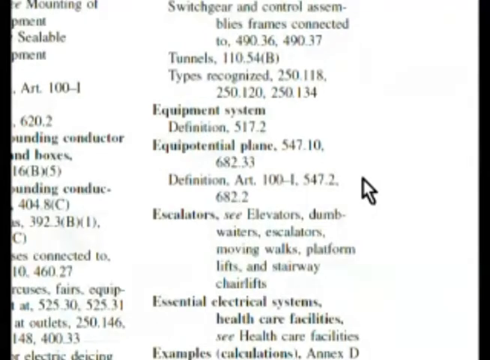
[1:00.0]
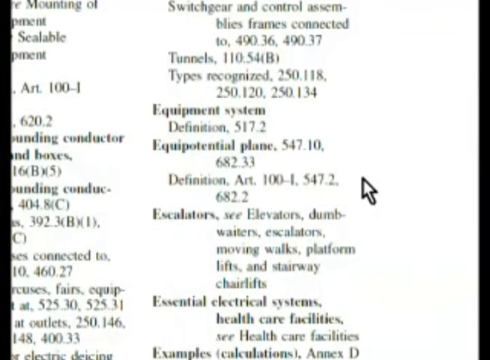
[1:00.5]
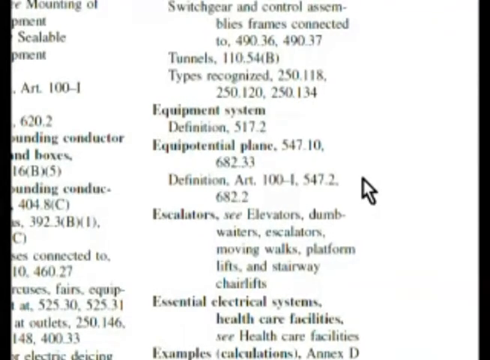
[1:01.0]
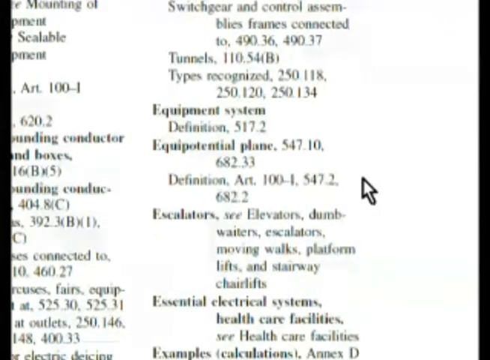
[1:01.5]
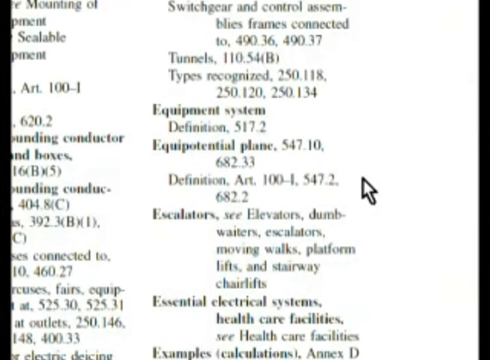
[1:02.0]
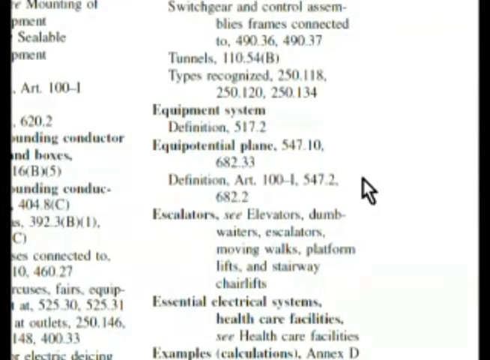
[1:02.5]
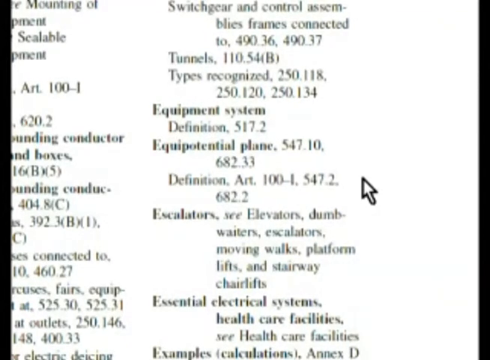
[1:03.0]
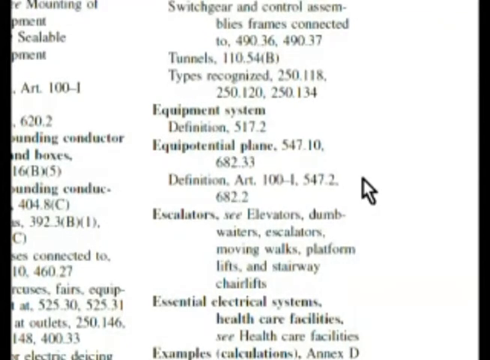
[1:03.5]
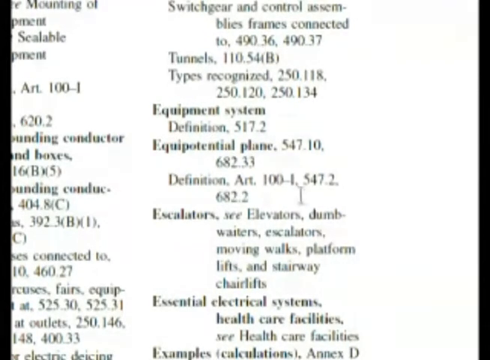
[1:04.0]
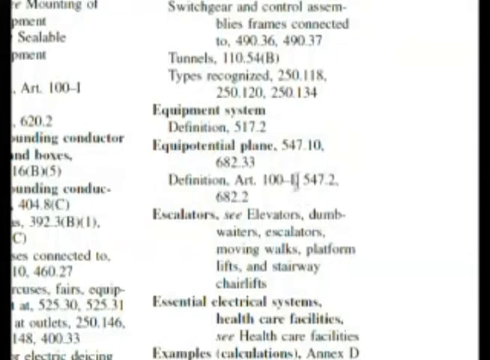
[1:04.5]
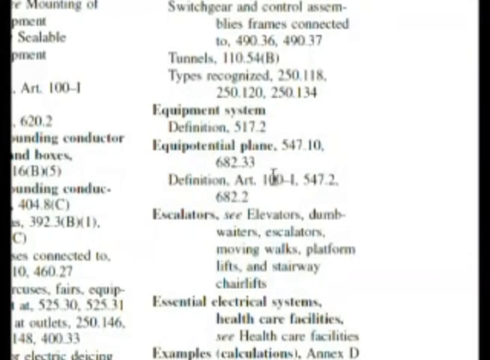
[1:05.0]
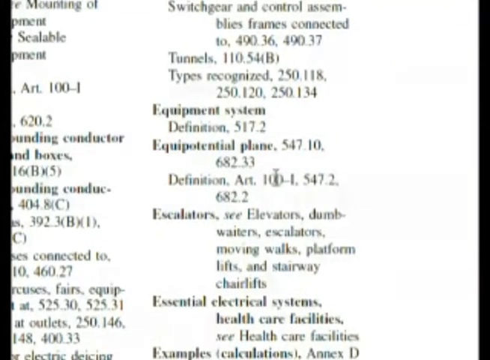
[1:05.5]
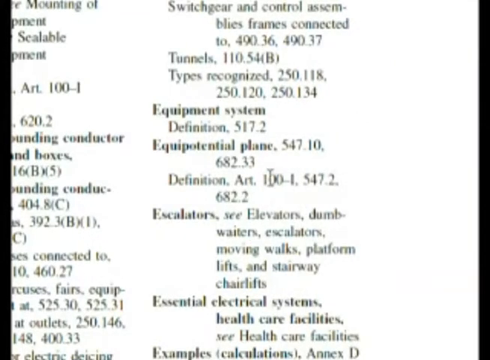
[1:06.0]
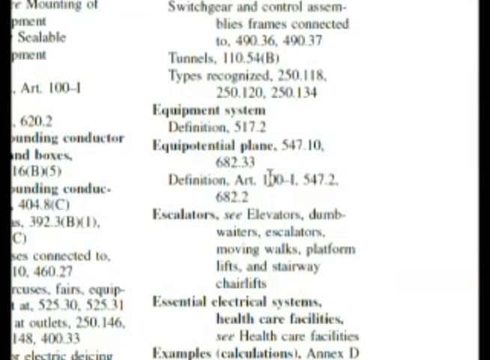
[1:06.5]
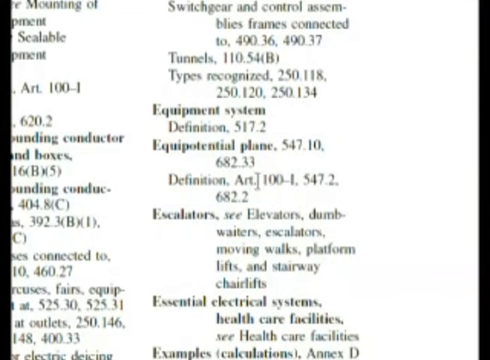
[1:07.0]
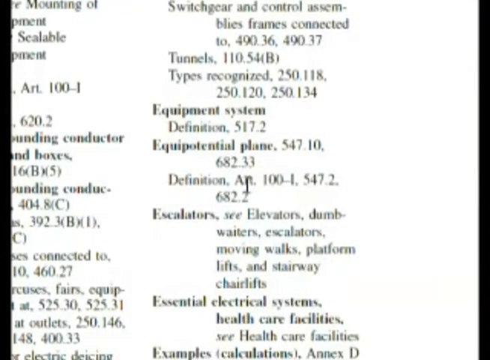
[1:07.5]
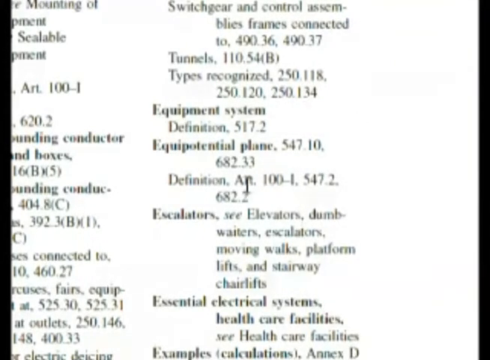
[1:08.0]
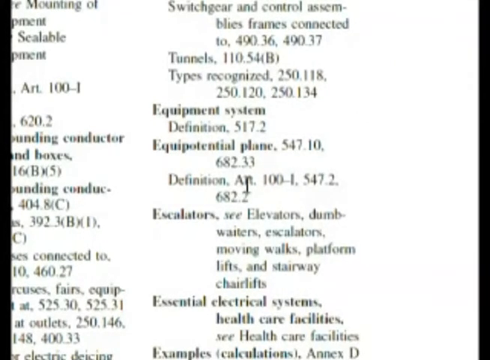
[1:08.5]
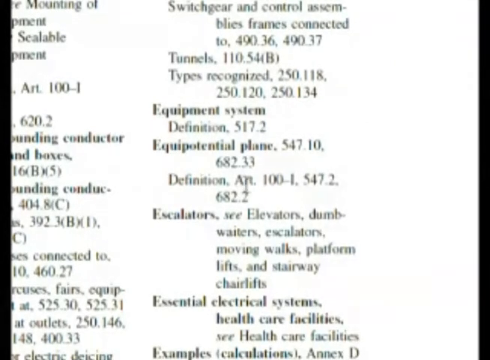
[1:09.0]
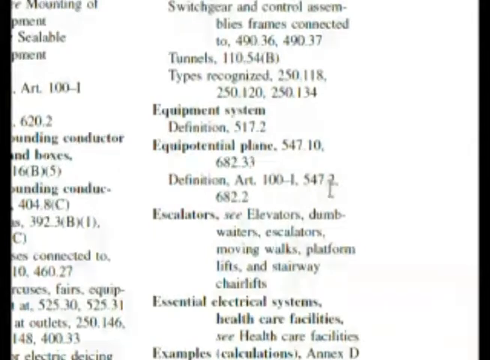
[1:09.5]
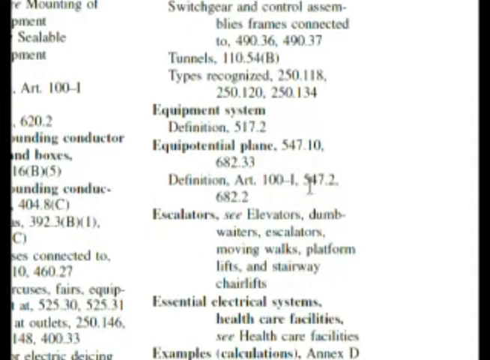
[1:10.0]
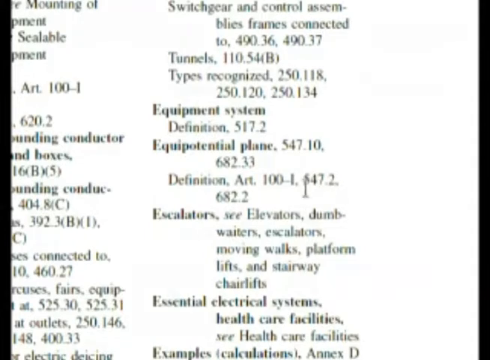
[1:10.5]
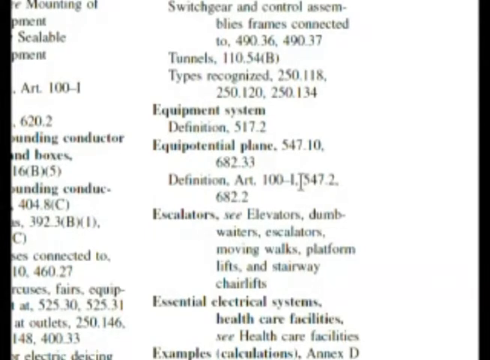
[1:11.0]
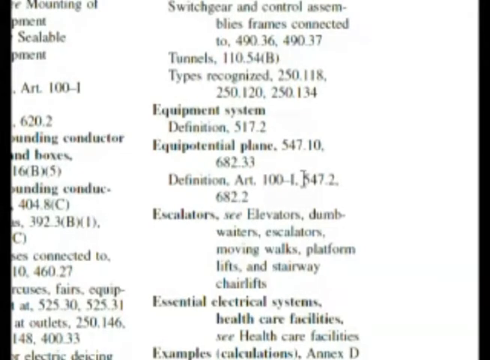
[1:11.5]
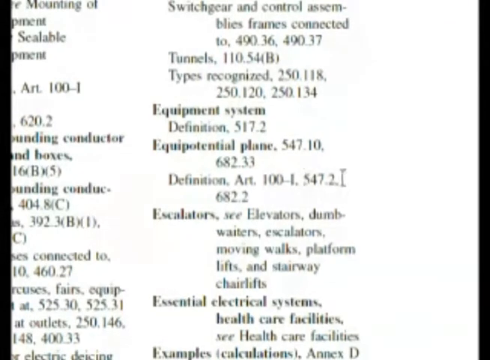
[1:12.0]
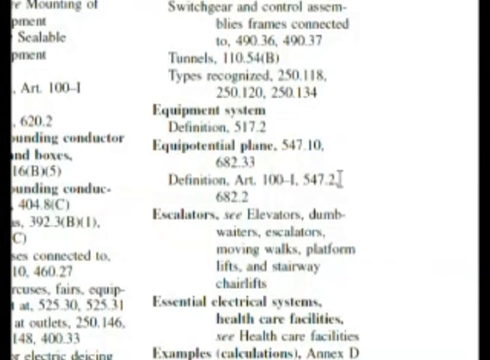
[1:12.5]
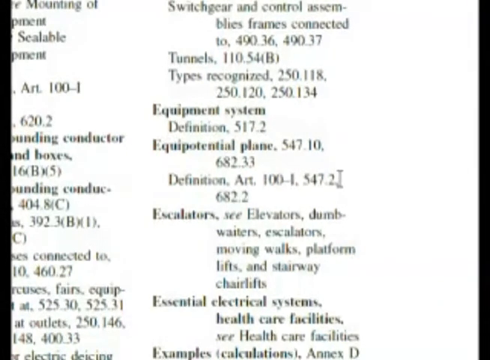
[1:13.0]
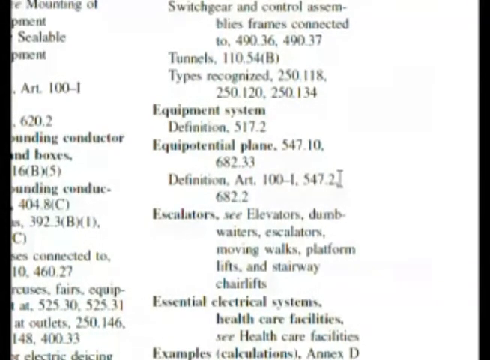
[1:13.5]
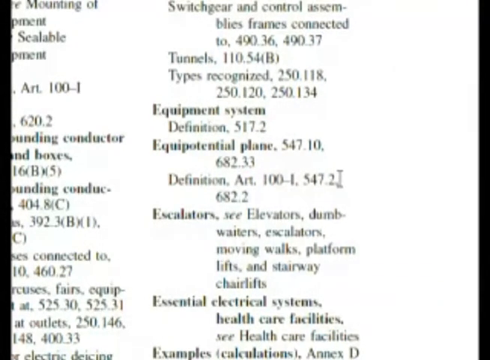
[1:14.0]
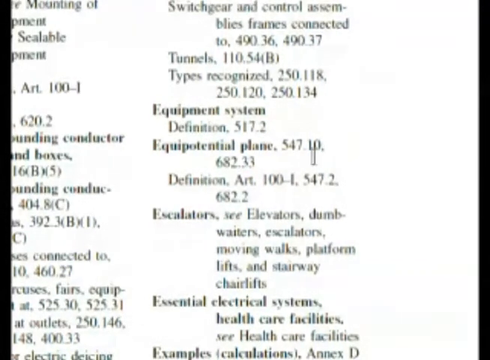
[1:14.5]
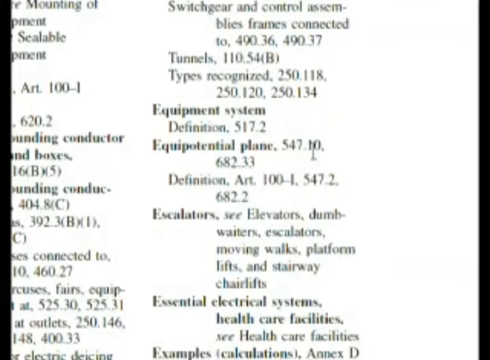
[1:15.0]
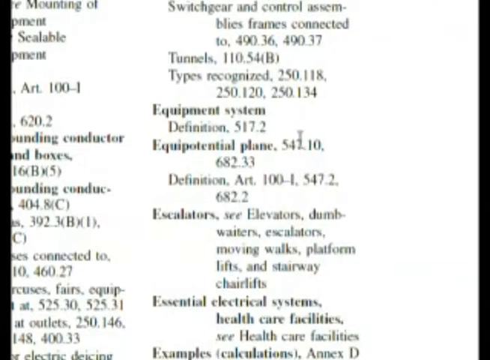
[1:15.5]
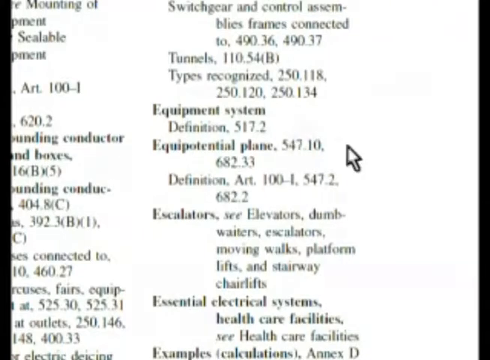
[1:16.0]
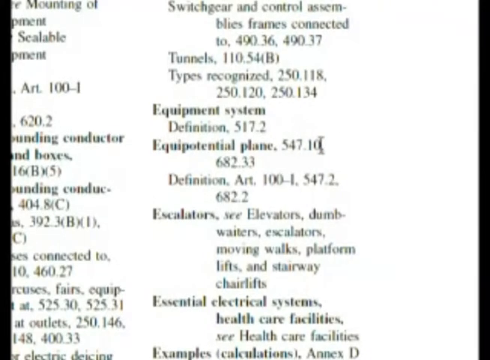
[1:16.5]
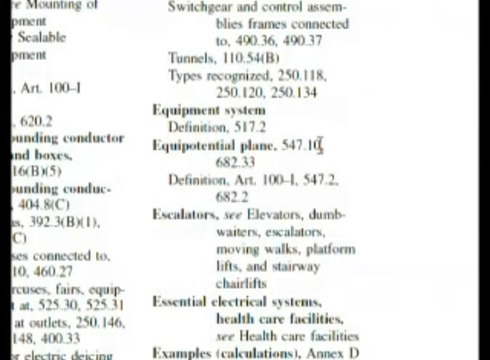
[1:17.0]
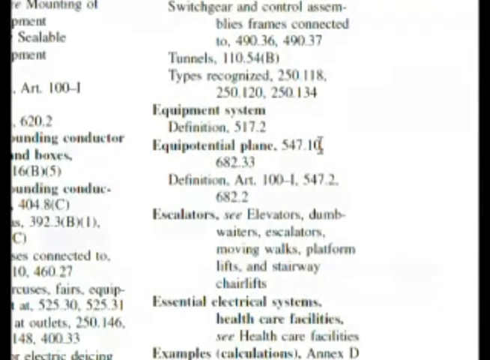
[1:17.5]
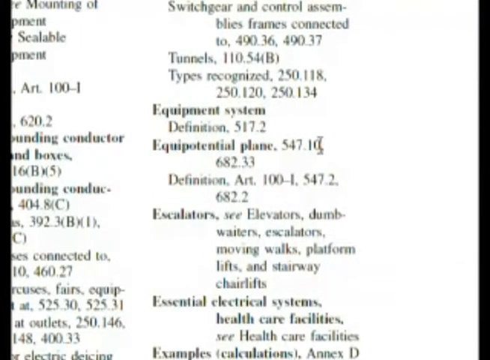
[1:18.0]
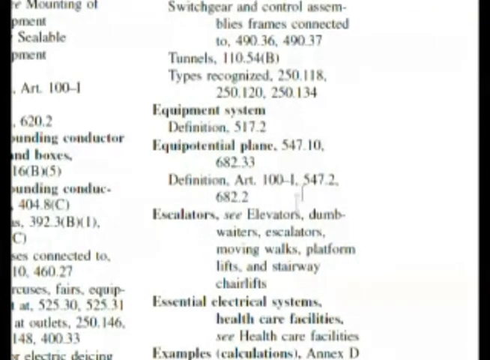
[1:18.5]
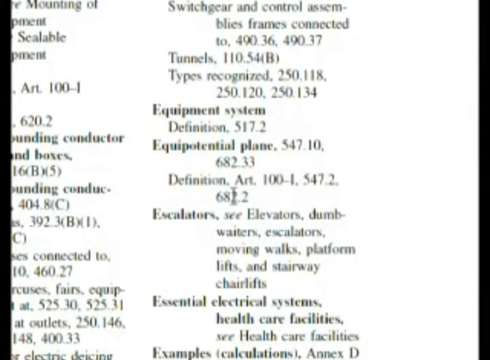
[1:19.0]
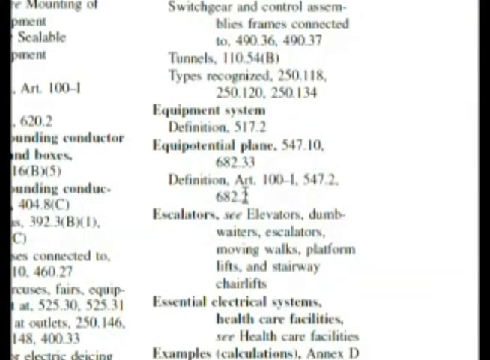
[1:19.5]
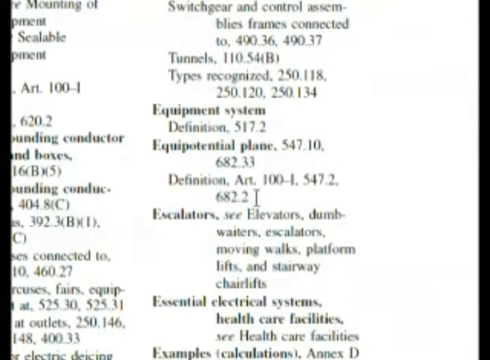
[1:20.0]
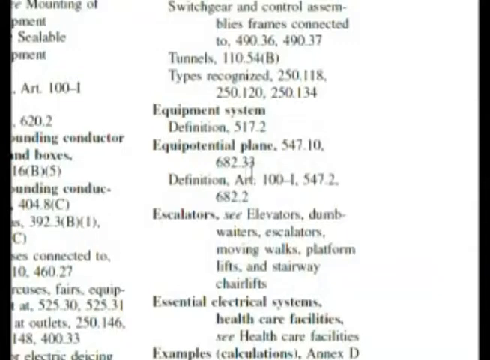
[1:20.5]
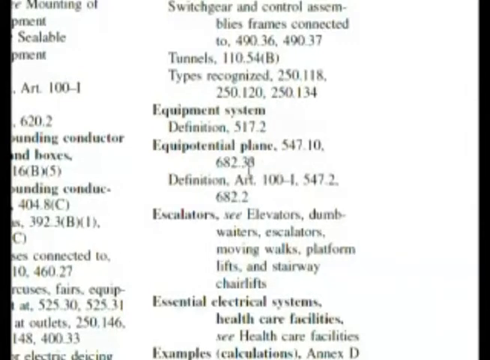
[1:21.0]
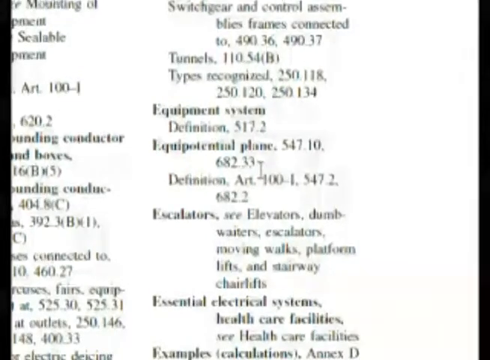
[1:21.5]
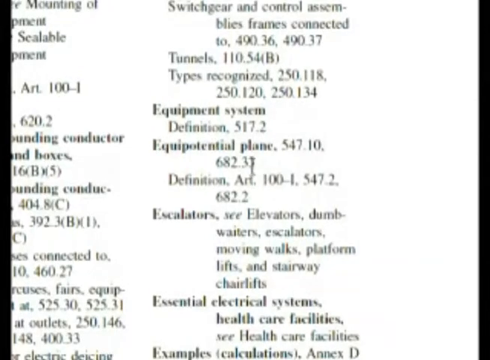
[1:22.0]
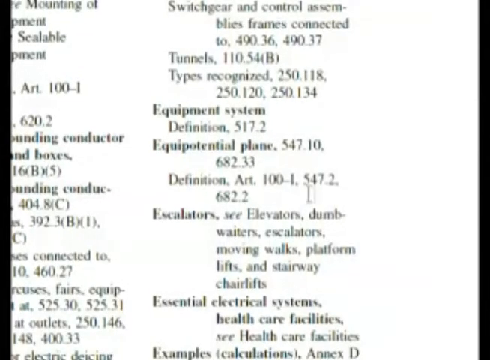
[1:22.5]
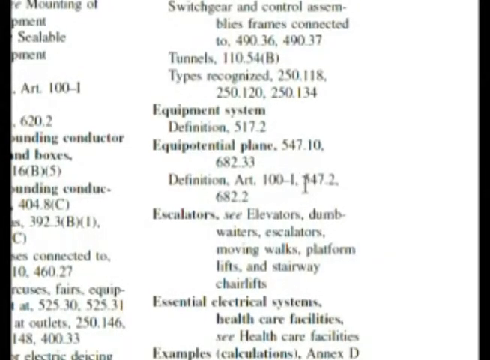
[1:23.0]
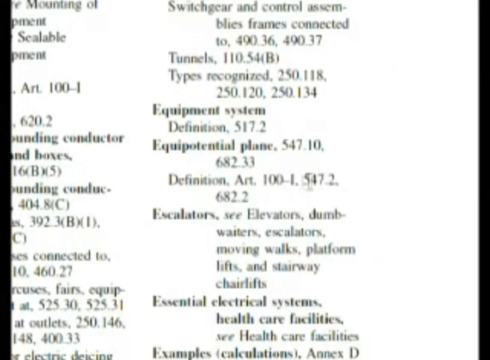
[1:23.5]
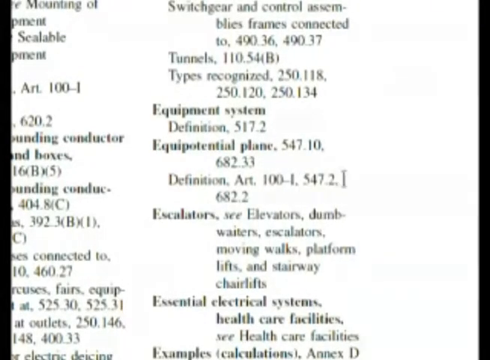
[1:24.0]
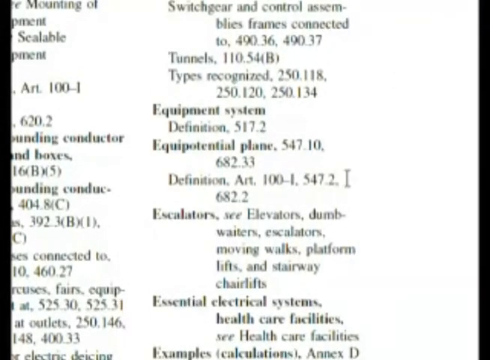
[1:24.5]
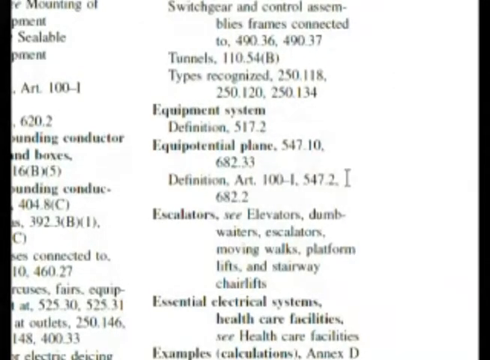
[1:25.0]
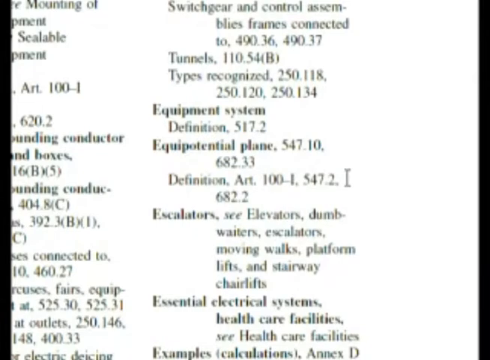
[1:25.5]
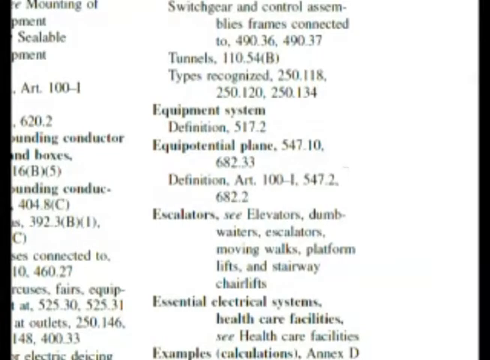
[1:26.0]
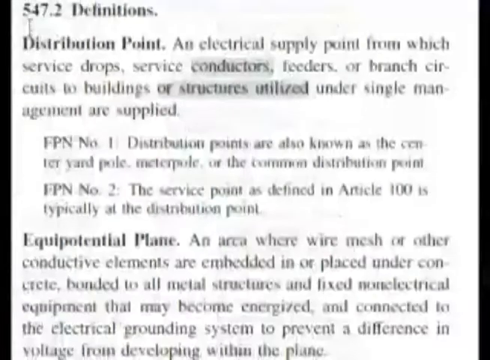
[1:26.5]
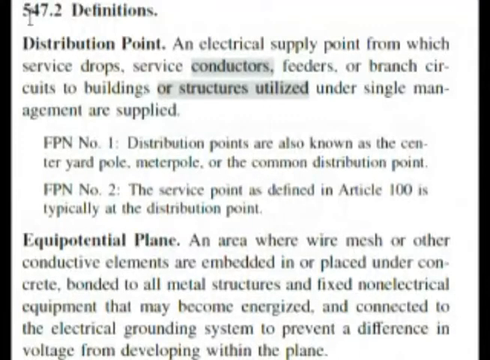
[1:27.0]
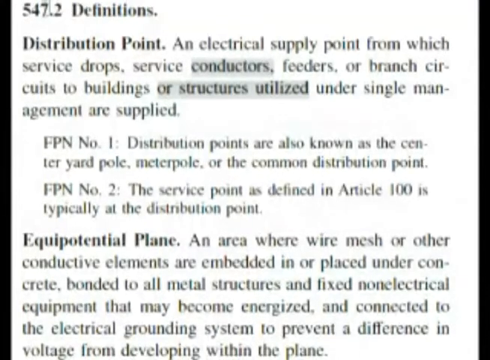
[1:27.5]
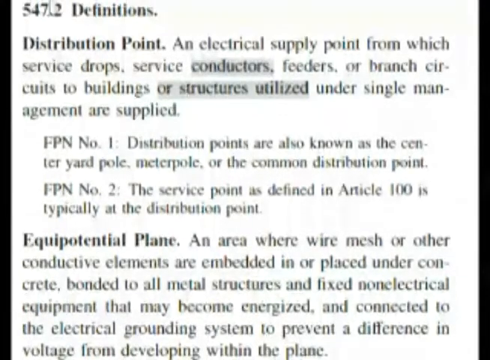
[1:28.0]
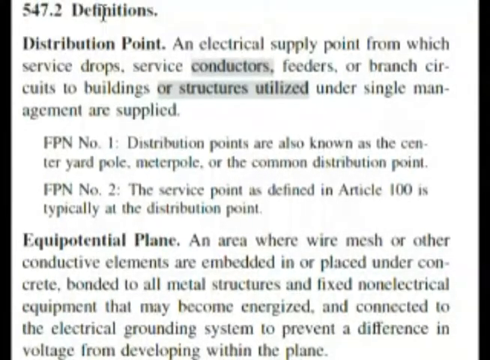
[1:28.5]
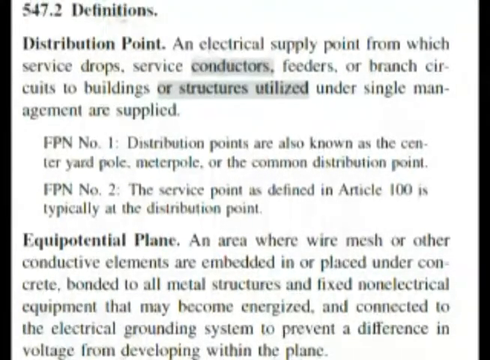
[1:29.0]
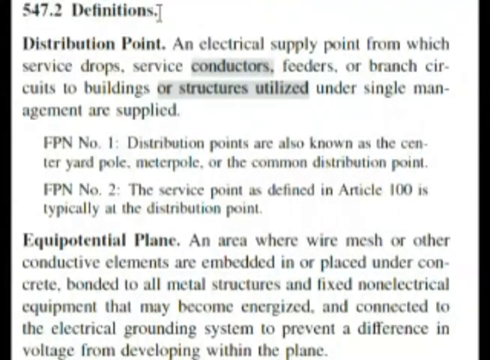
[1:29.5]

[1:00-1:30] The glossary page is shown, with the cursor moving around the equipotential plane listing. The word "definition" appears there. Apparently definitions is clicked, and the screen jumps to text reading: "547.2 definitions distribution point an electrical supply point from which service drops service conductors feeders or branch circuits to buildings or structures utilized under single management are supplied FPN number one distribution points are also known as the center yard pole meter pole or the common distribution point FPN number two, the service point as defined in article 100 is typically at the distribution point. Equipotential plane, an area where wire mesh or other conductive elements are embedded in or placed under concrete, bonded to all metal structures and fixed non-electrical equipment" …